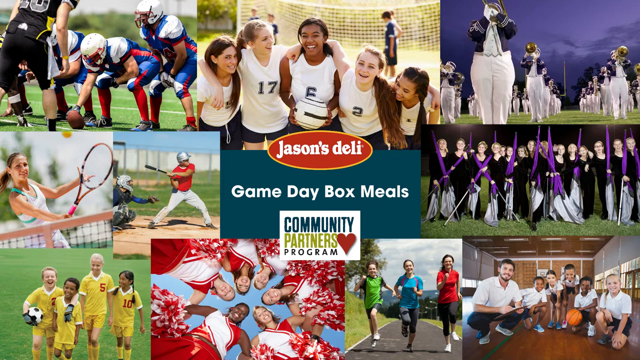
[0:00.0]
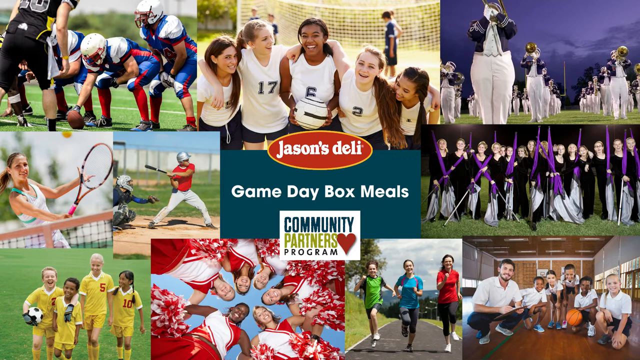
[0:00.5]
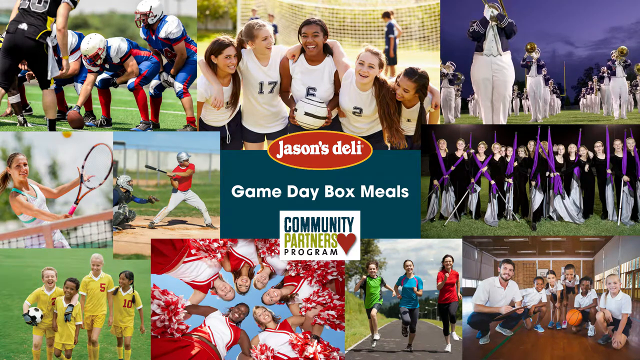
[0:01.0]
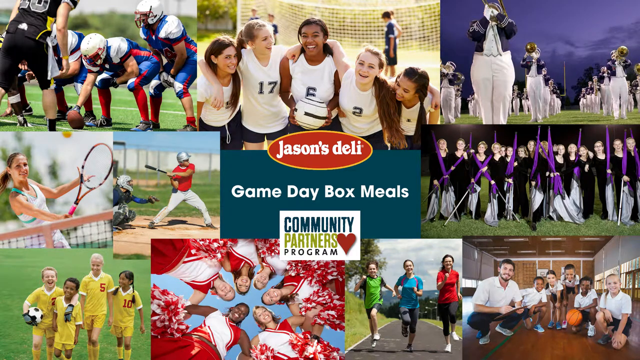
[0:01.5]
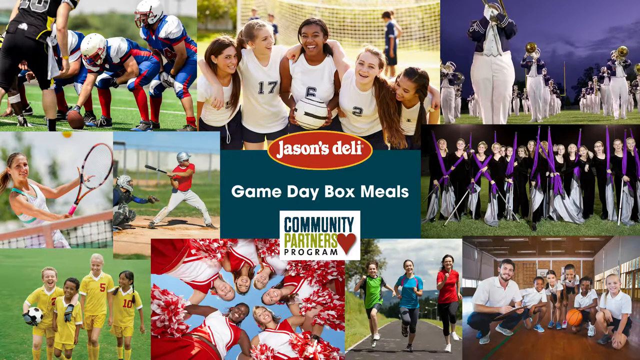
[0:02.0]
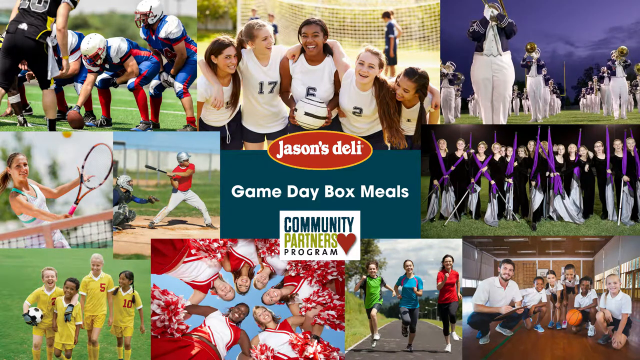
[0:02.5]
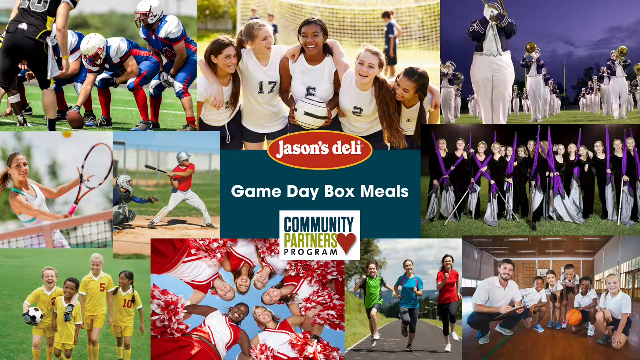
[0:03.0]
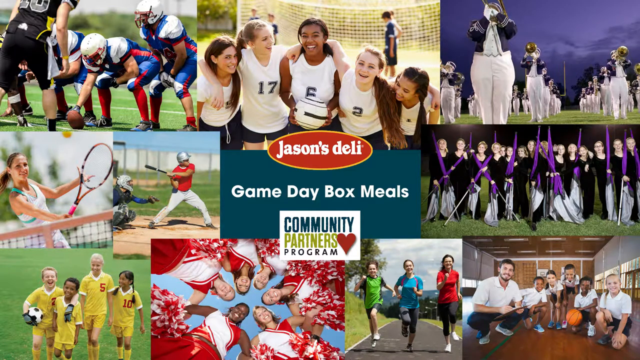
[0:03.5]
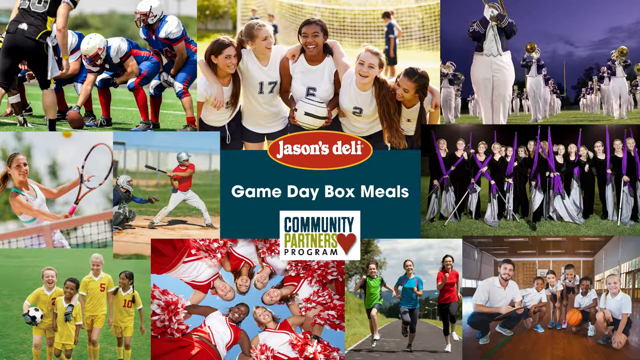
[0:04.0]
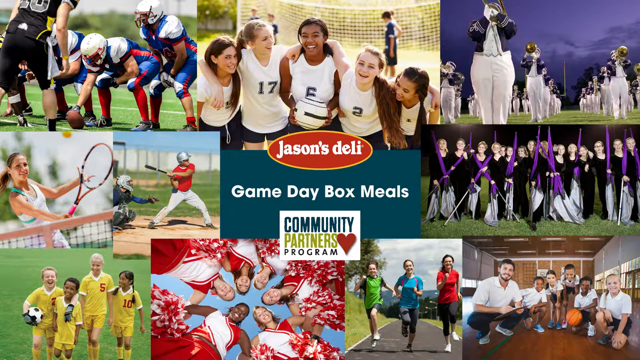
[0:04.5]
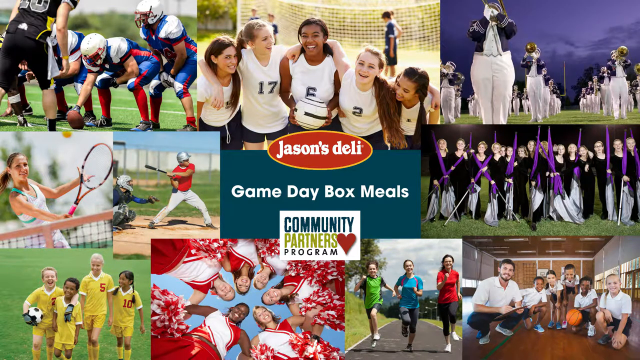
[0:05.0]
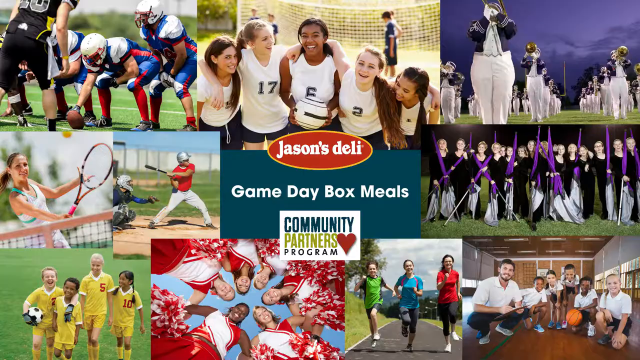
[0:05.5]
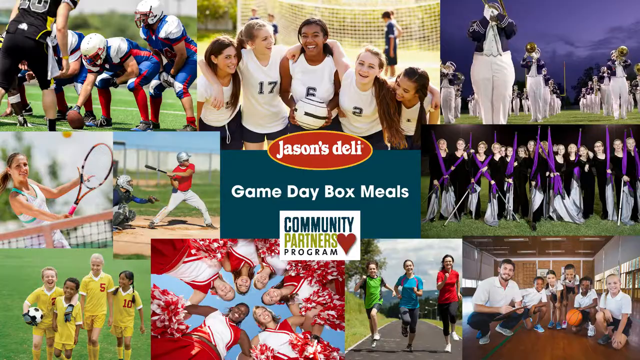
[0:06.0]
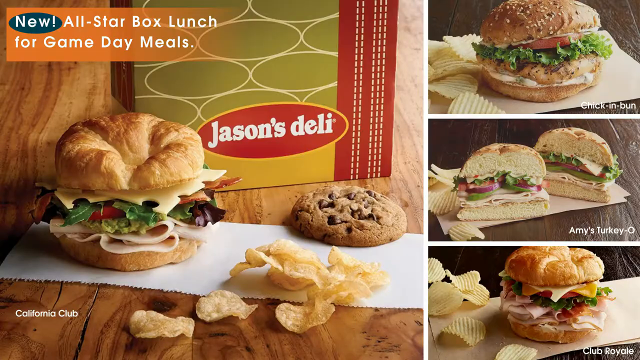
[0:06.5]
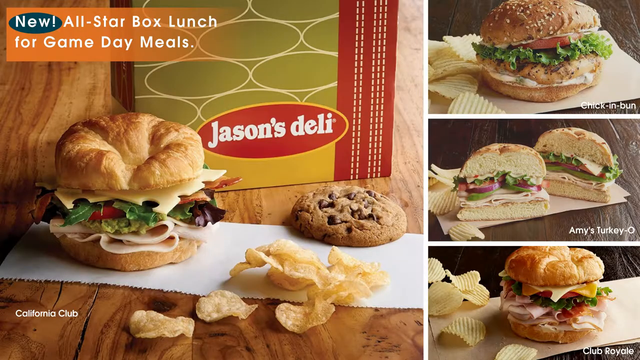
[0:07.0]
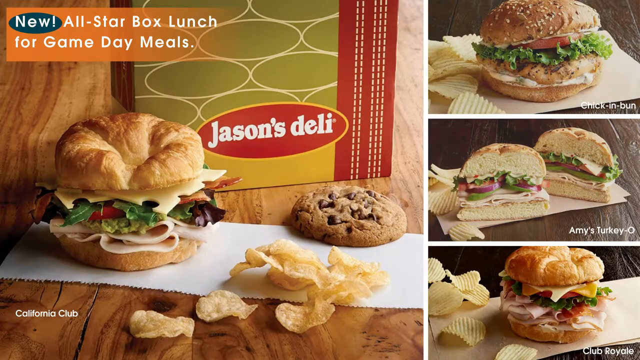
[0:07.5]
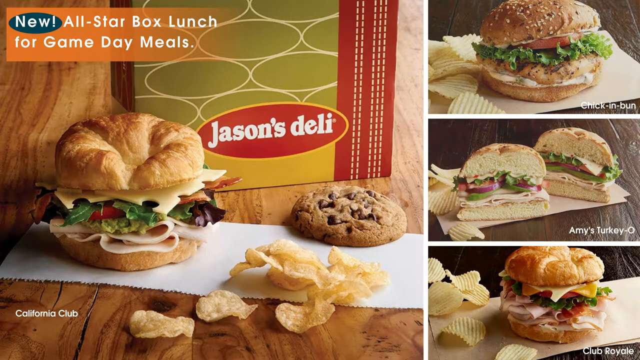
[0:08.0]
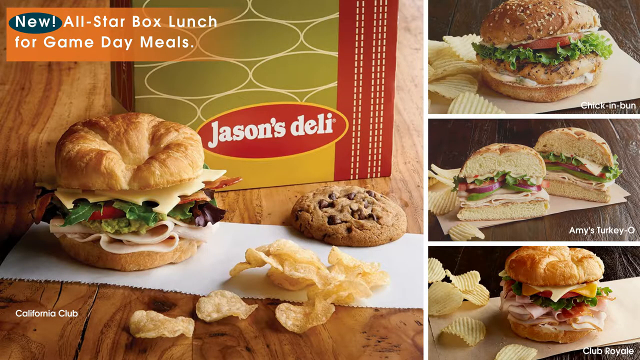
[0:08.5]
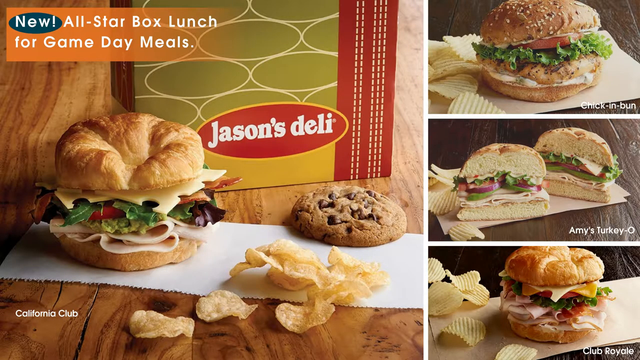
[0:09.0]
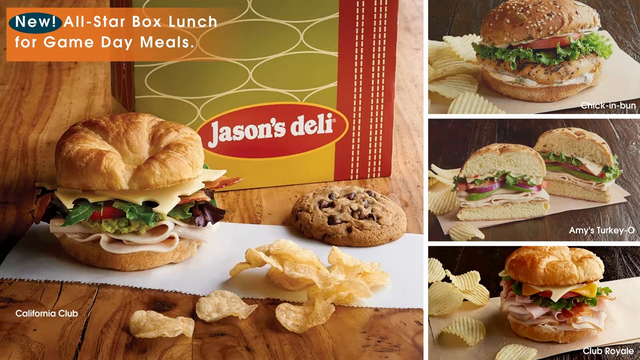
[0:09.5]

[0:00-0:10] The video opens with many photographs of people playing sports. In the top right is an American football game, and in the centre a team of girls playing football or soccer. In the top right is a marching band in the evening, and underneath this in the centre is a group of women in black holding purple and grey flags. Below these at the bottom is a man or coach with some children with a basketball, and next to them in the centre is a group of three young women running. Further to the left is a headshot of some cheerleaders in red outfits, and furthest right at the bottom is a group of four soccer players in yellow kit, above whom is a female tennis player playing tennis. In the centre is a Jason's Deli logo in a round oval with a yellow-striped outline, and in a rectangle in the middle are the words "game day box meals" with the logo "community partners program" with a red heart. The page changes to a Jason's Deli "new all-star box lunch for game day meals" page. In the centre picture, to the left, is a Jason's Deli box with a croissant filled with turkey slices, salad and cheese in front of it, and in front of that are some loose crisps on the table top and a cookie. On the right of the page, in the top corner, is a chicken sandwich with crisps called Chicken Bun. Next is an Amy's Turkey O, a chicken sandwich also with some crisps, and at the bottom is the turkey salad sandwich on a croissant with some crisps.